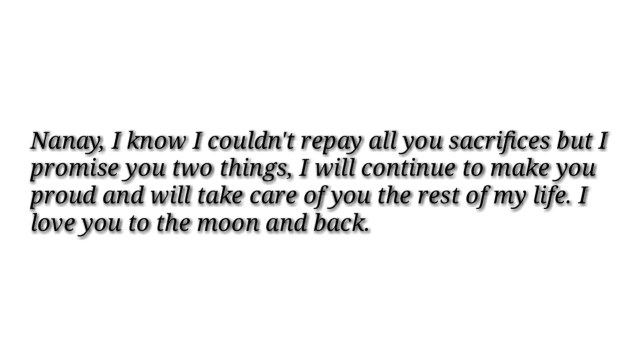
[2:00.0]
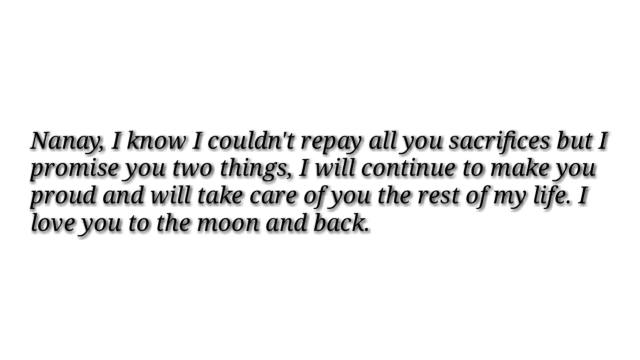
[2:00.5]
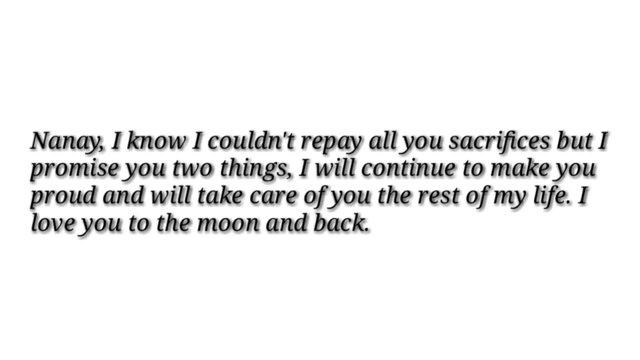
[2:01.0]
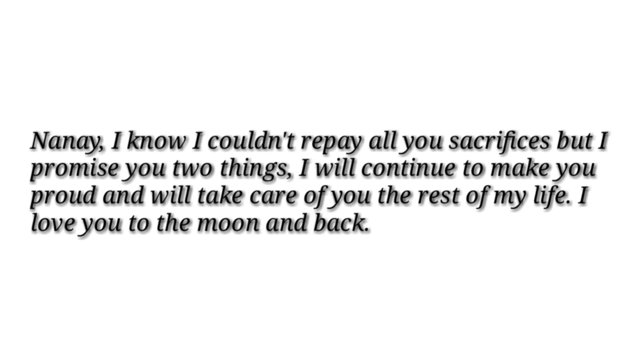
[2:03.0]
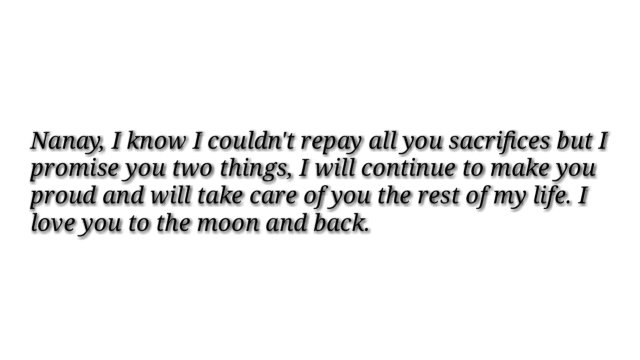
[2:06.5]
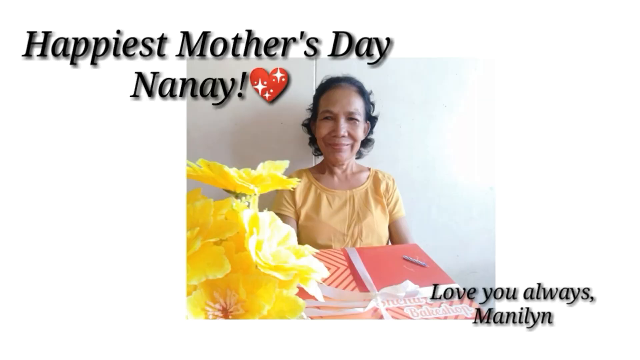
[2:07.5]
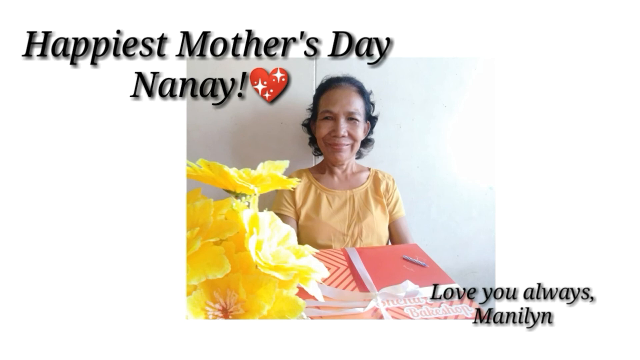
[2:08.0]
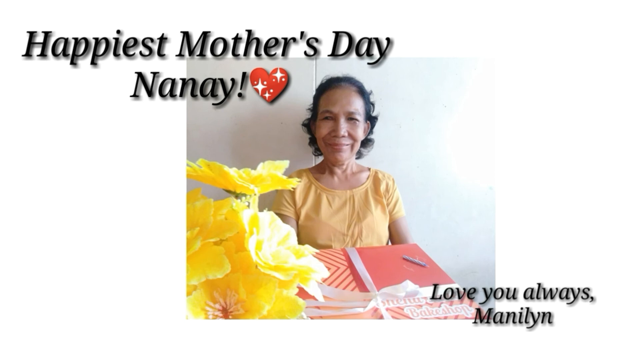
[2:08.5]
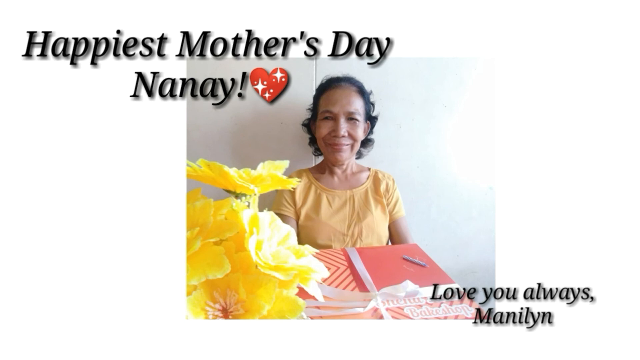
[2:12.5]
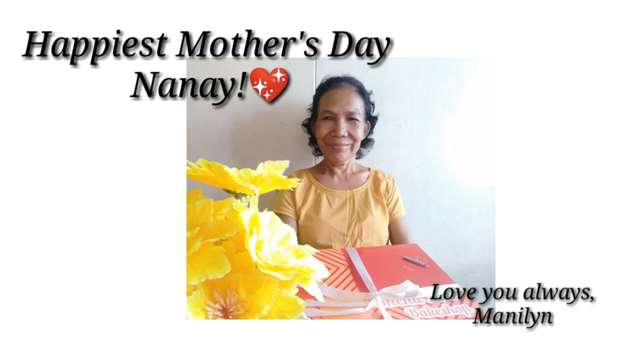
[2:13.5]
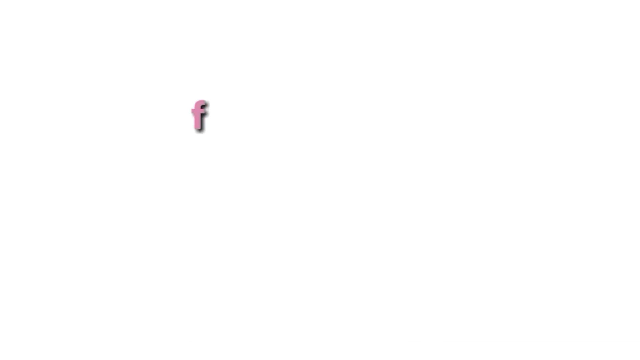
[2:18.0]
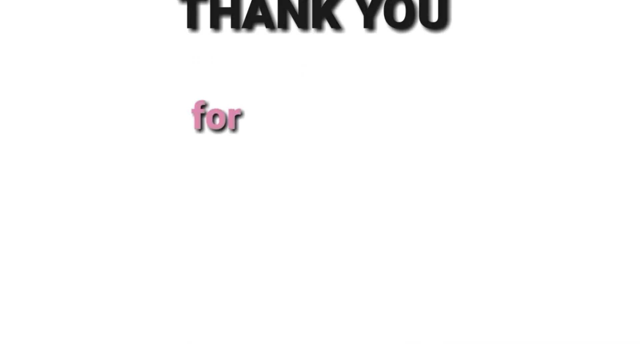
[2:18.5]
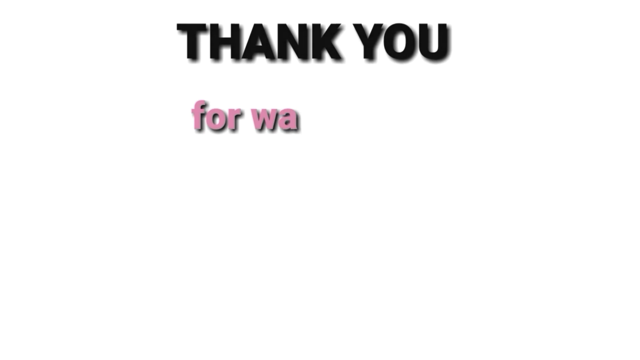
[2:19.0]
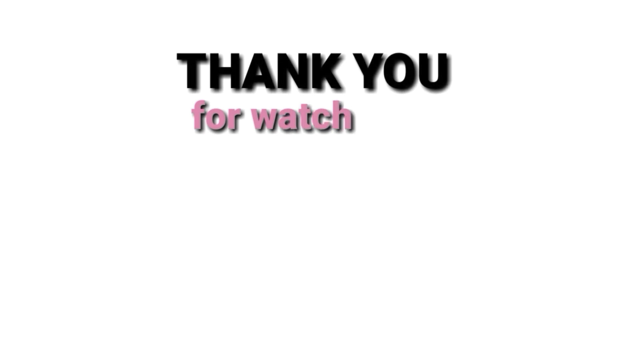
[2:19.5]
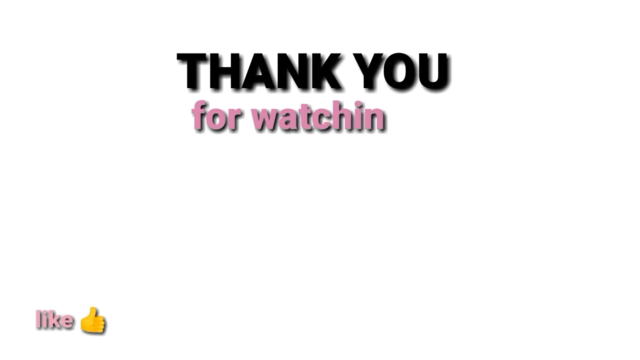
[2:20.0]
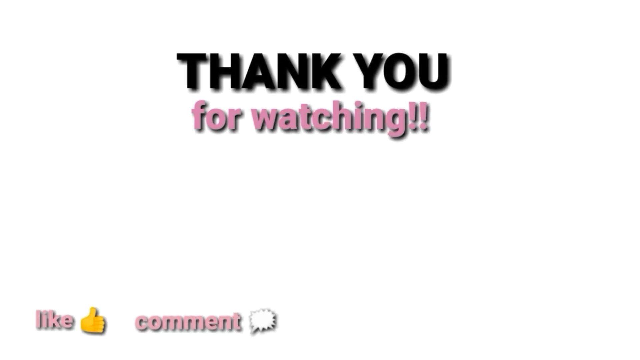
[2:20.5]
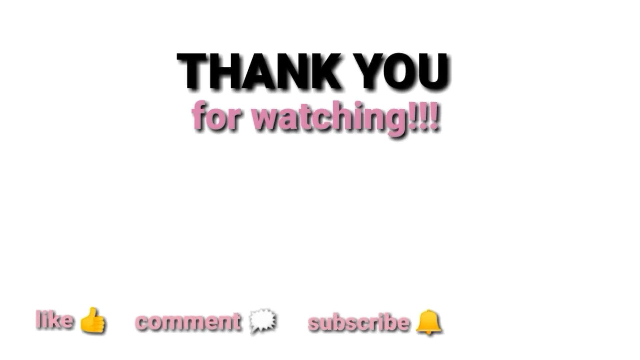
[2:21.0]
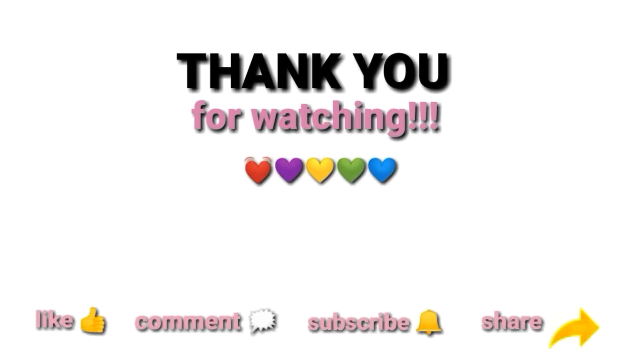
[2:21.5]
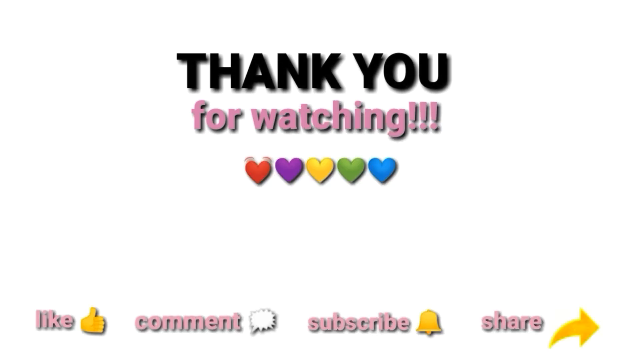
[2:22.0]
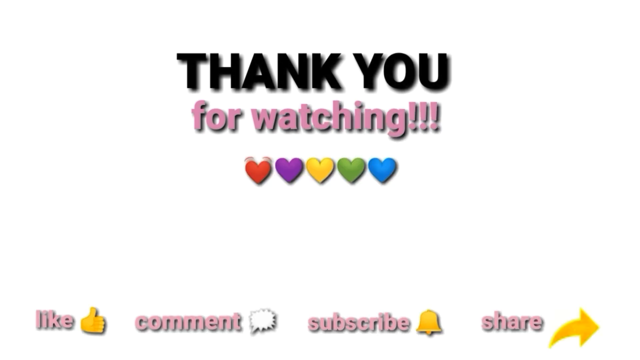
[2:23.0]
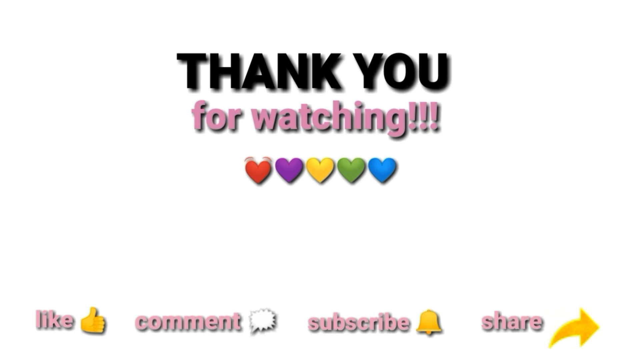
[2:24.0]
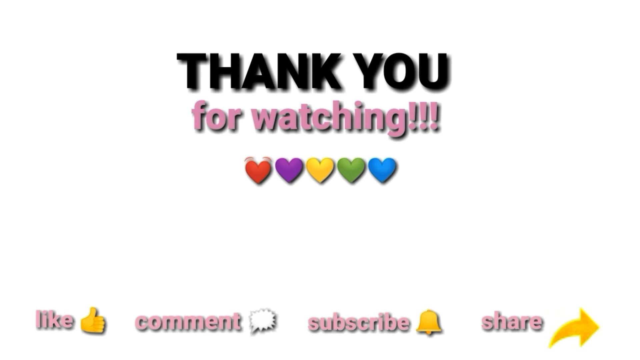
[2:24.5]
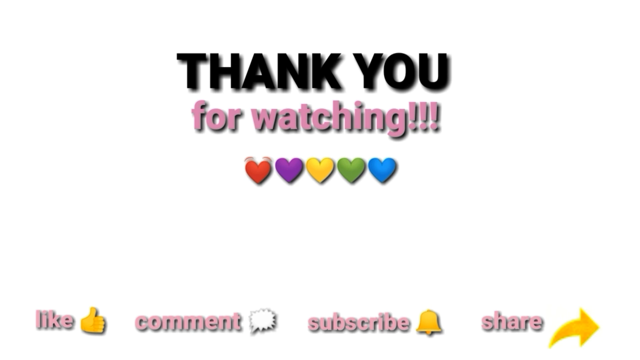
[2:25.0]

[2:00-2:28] Something in one of the pictures in the background looks like "happy birthday", but the occasion is a daughter with her mother on Mother's Day.